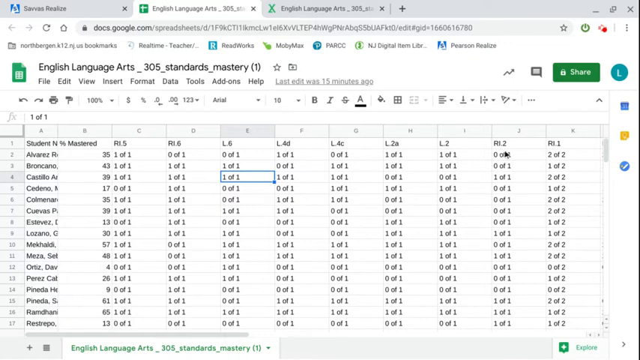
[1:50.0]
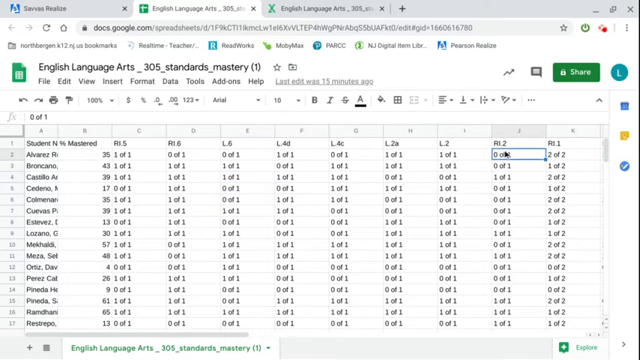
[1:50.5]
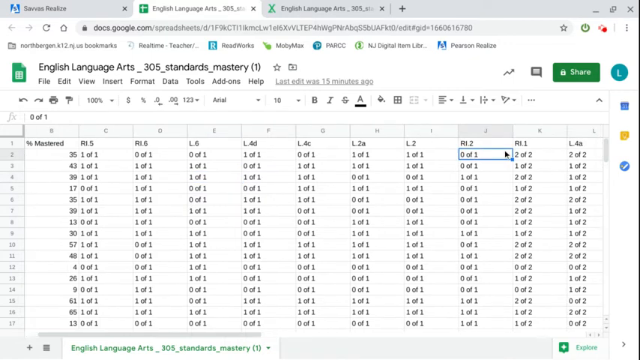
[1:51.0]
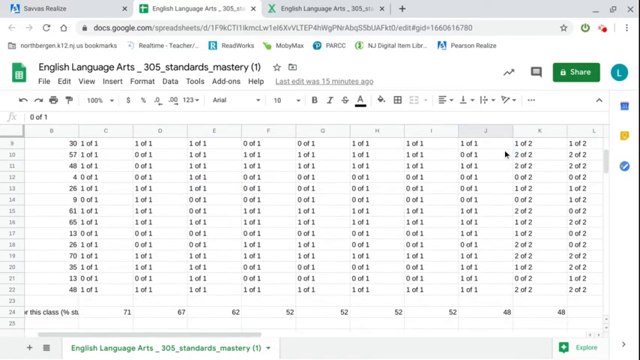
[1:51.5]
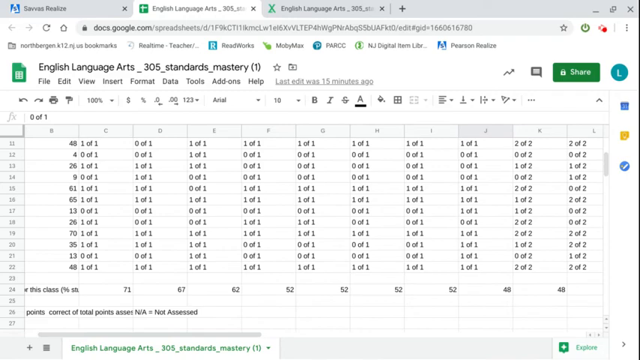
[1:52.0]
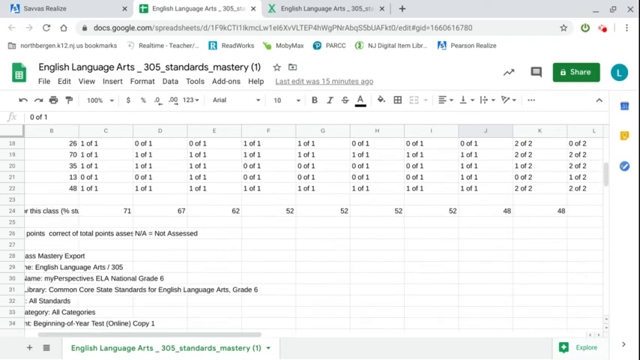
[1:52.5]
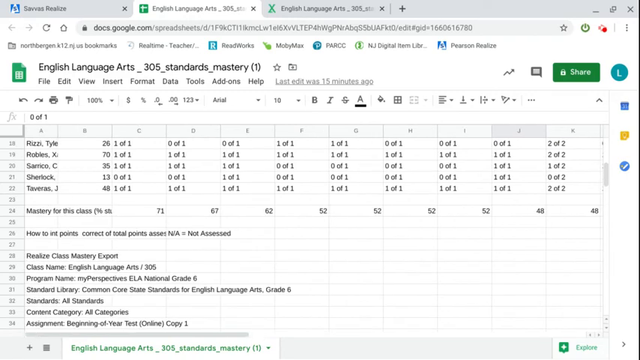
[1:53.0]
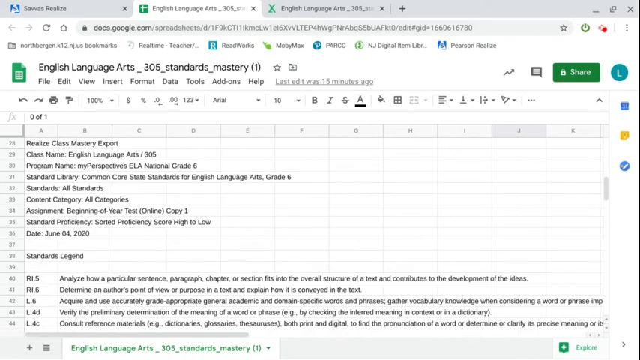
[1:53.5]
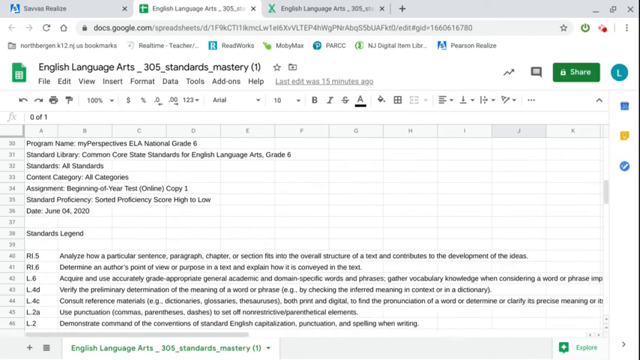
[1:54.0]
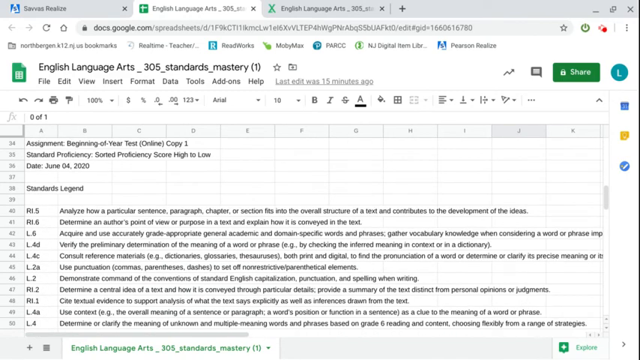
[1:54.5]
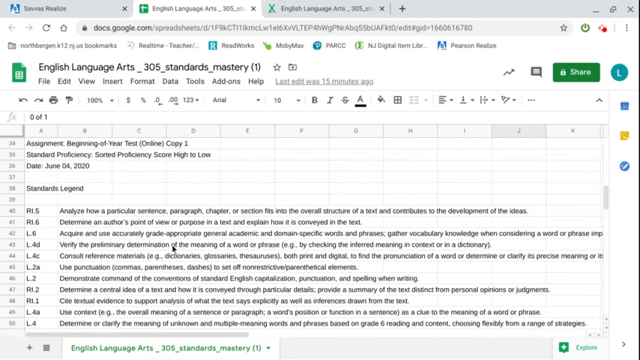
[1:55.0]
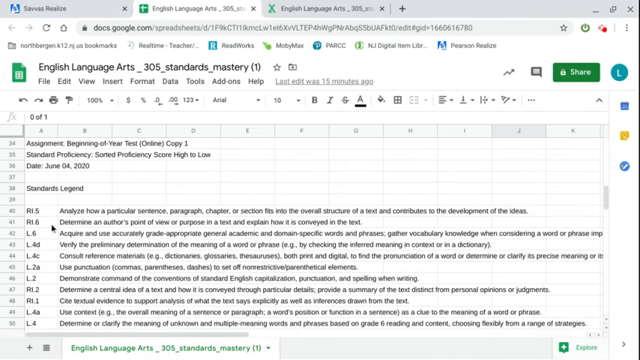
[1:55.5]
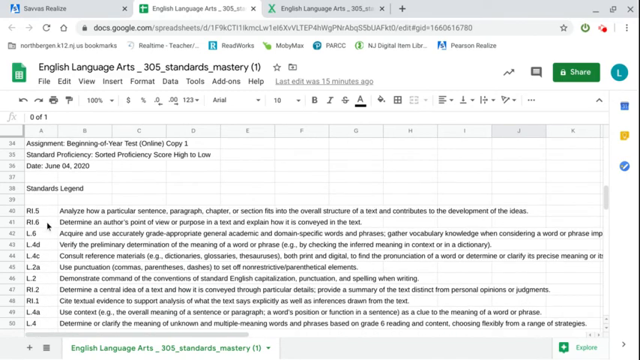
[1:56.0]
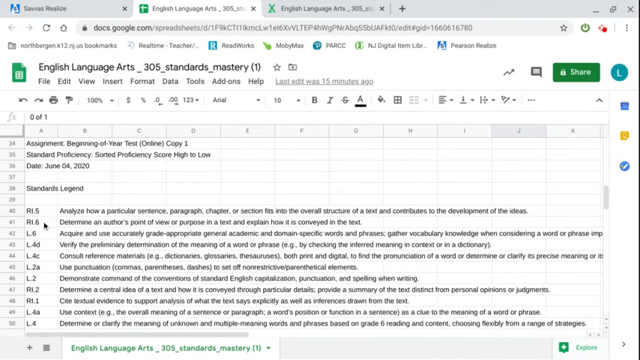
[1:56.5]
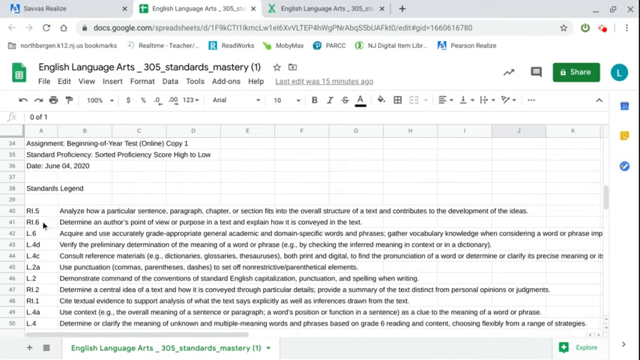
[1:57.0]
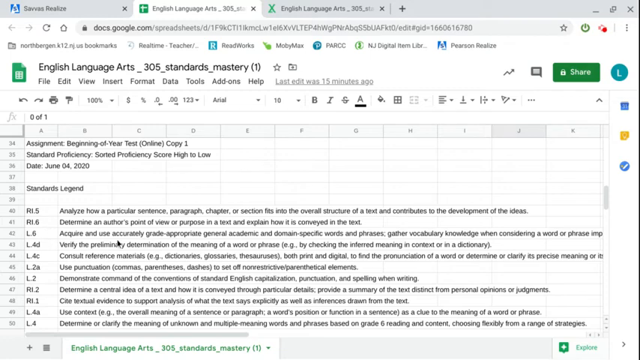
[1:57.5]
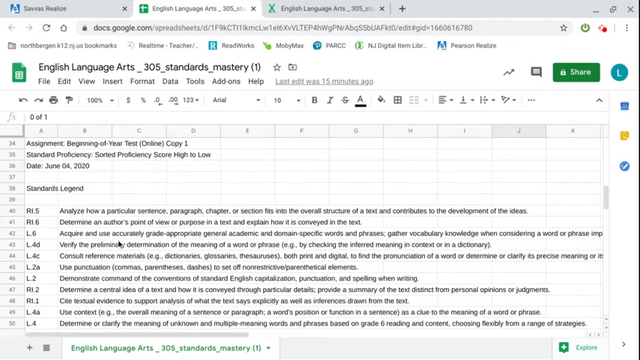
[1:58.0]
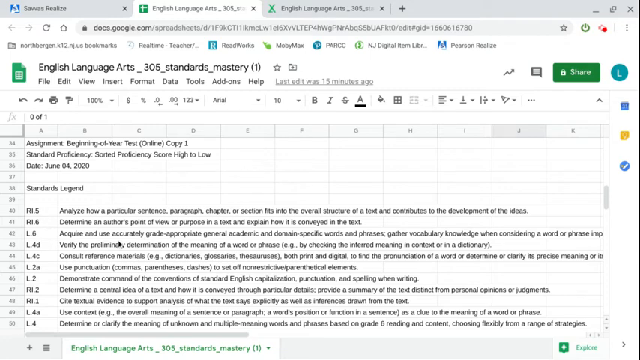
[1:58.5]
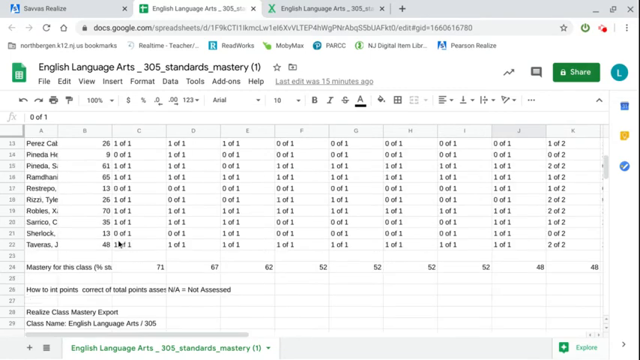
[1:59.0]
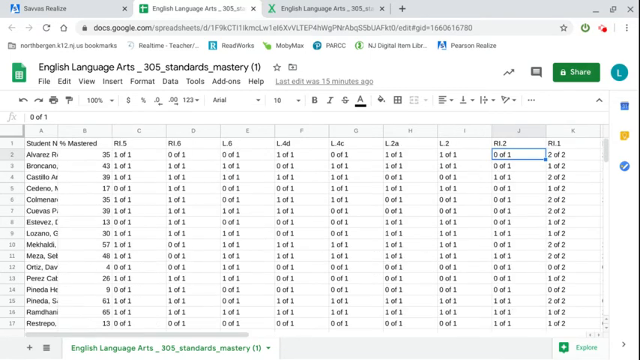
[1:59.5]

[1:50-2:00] On the second sheet, with a cell selected, the view scrolls down to the bottom of the sheet, where identifiers and descriptions of what the columns mean are shown. After a couple of seconds it scrolls back up to the top and a cell in the fourth row is selected.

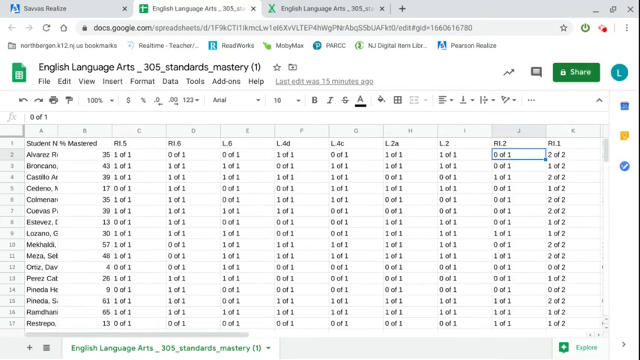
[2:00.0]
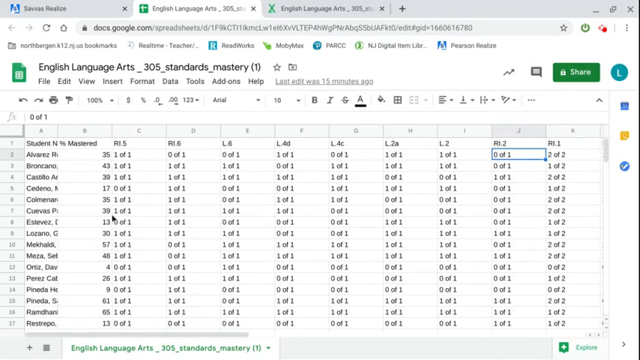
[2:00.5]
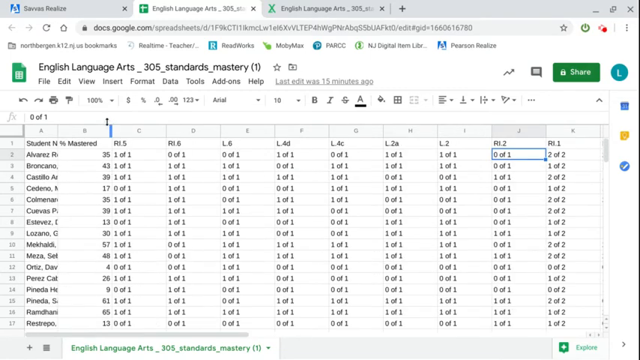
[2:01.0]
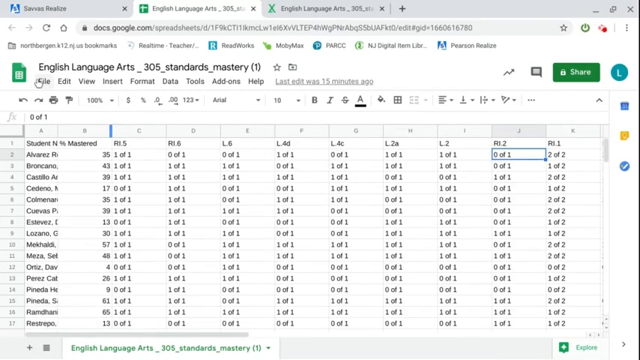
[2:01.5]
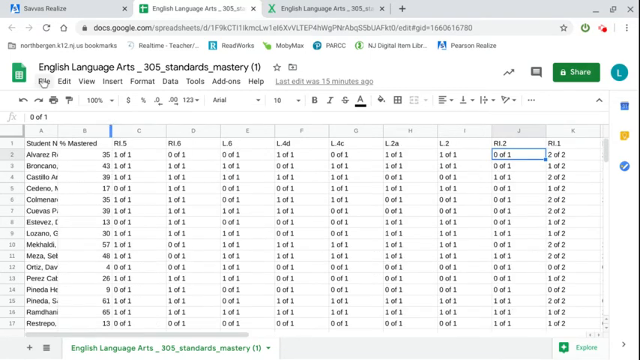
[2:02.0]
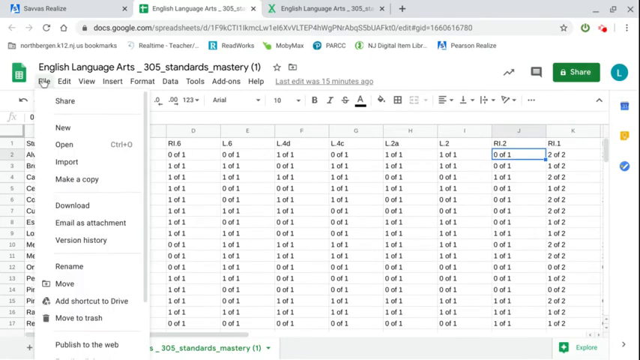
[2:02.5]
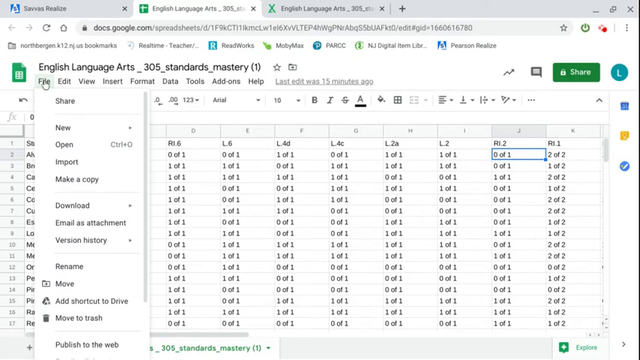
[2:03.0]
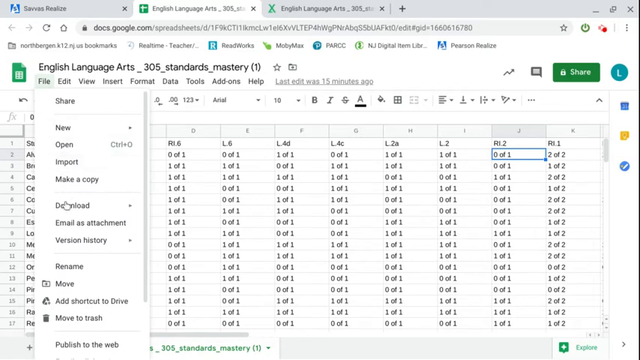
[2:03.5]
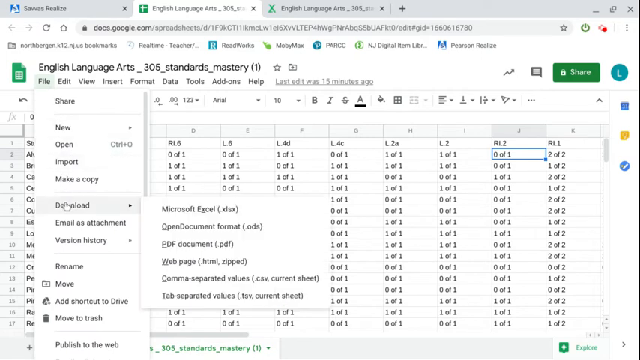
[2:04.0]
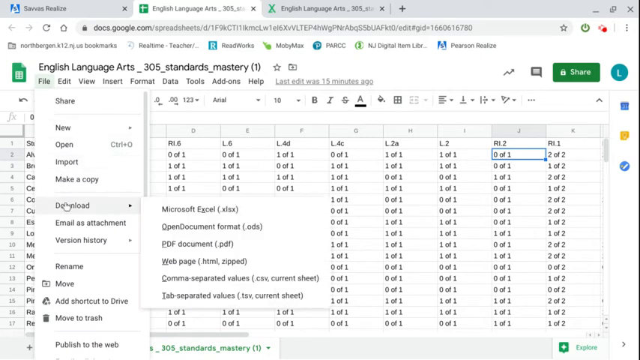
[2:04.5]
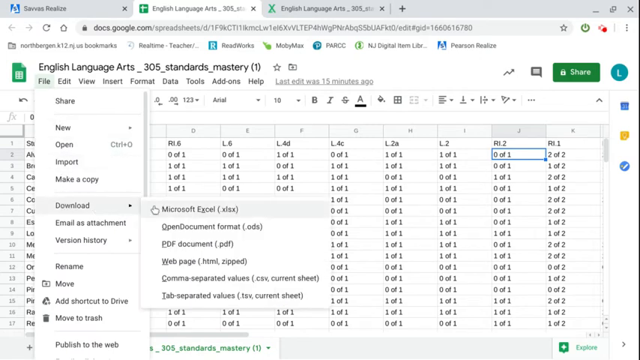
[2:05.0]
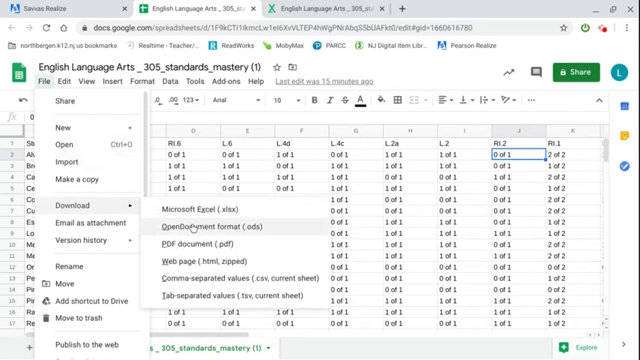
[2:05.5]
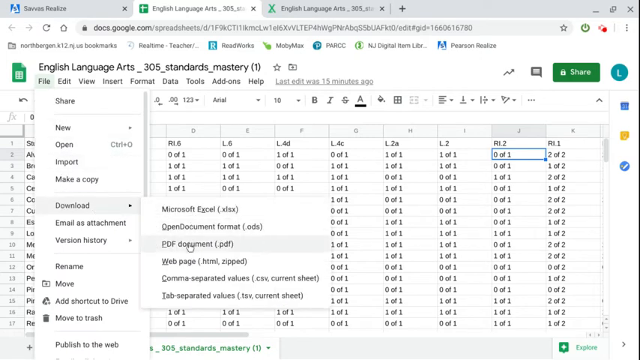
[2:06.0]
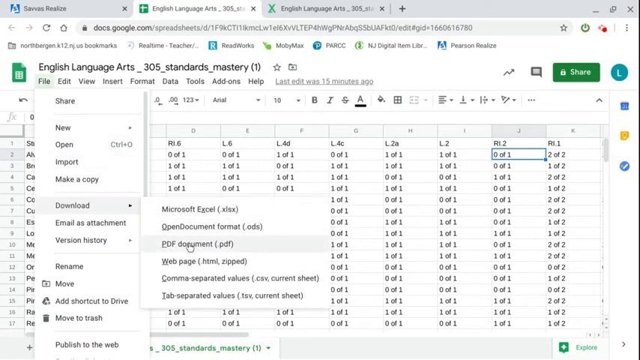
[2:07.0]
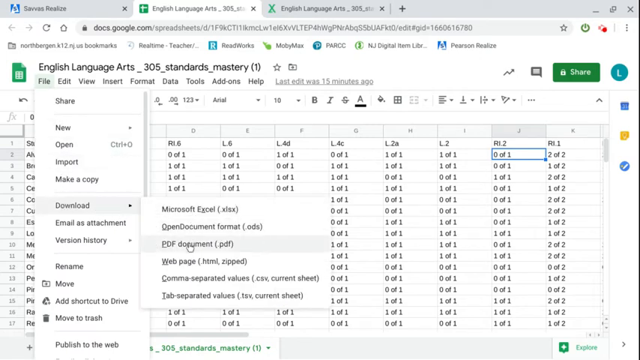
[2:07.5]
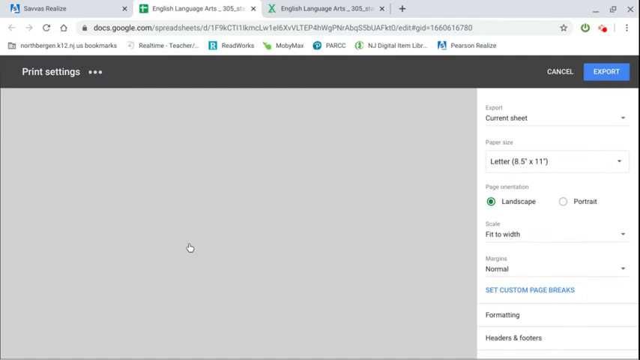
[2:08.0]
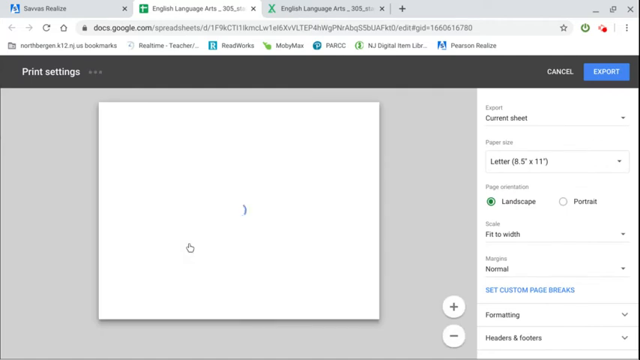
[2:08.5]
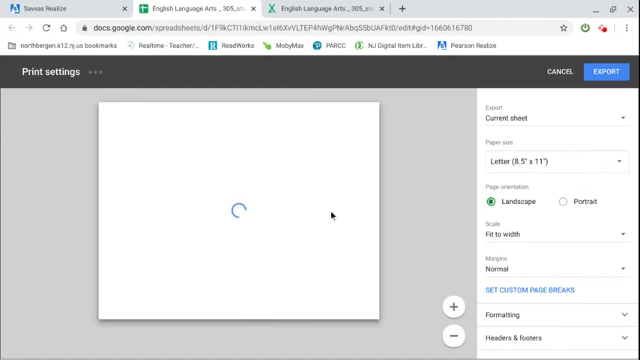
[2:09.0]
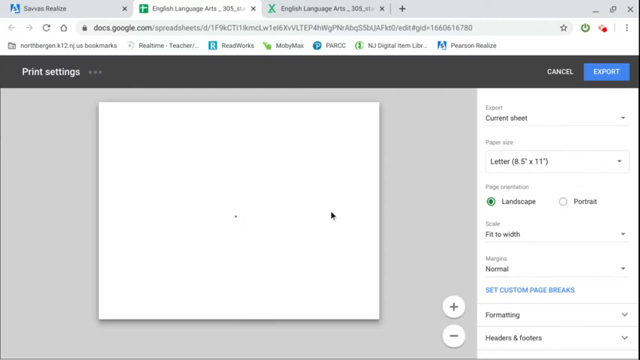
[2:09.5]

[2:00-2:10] On the second tab of the English Language Arts 305 Standards Mastery sheet, the download menu is opened to export the sheet as a PDF. A PDF preview opens, but the export is not yet completed.